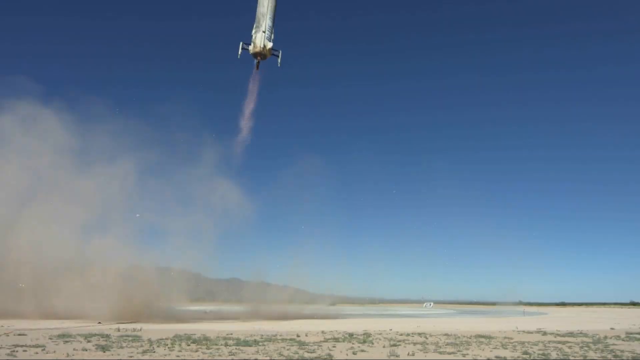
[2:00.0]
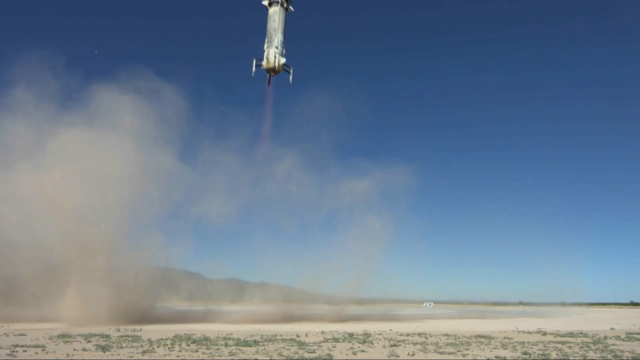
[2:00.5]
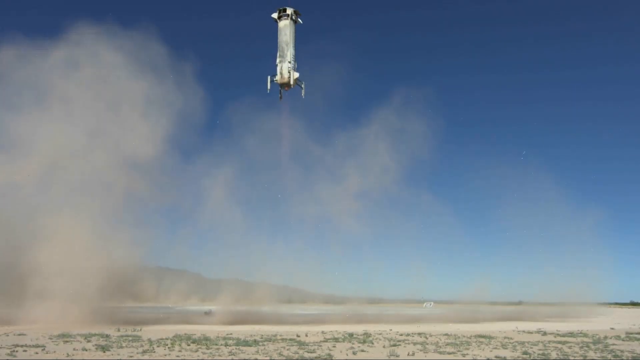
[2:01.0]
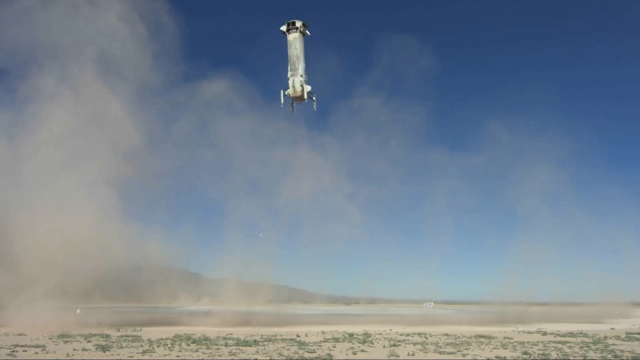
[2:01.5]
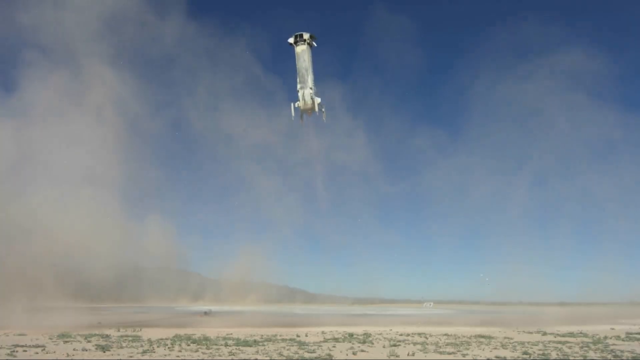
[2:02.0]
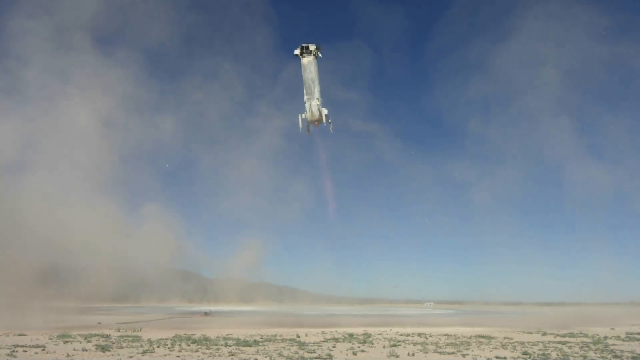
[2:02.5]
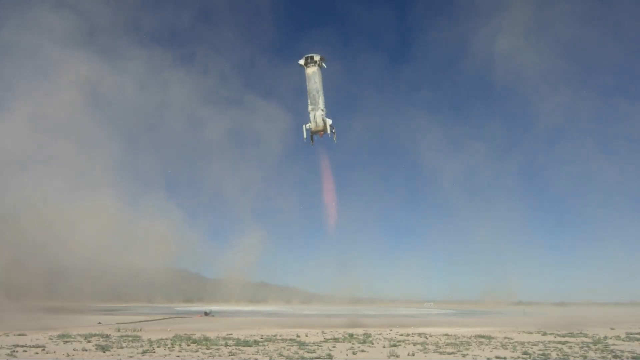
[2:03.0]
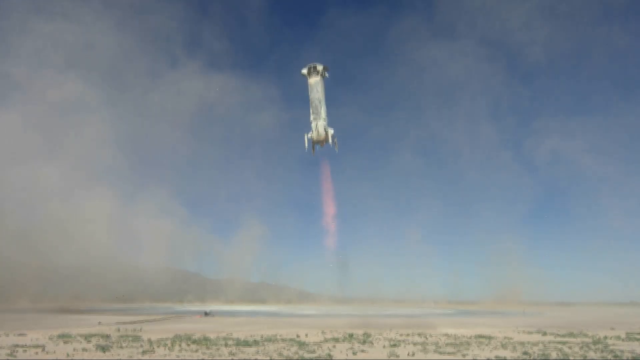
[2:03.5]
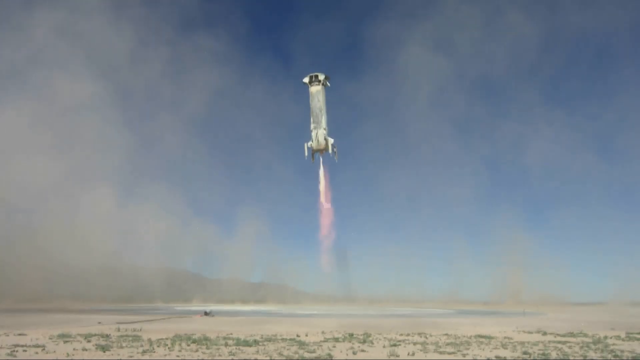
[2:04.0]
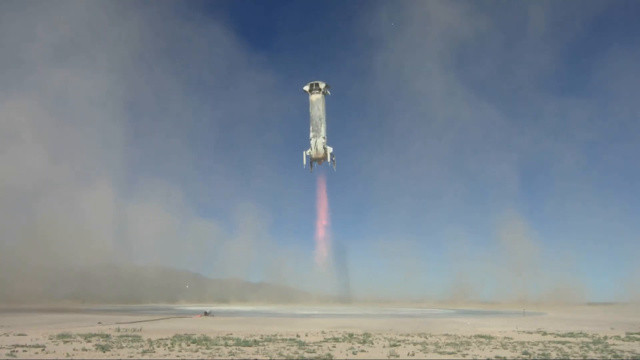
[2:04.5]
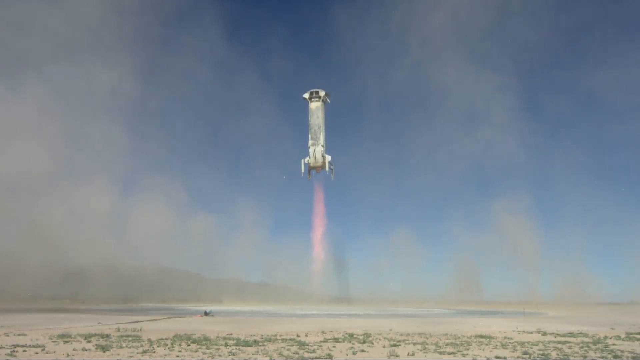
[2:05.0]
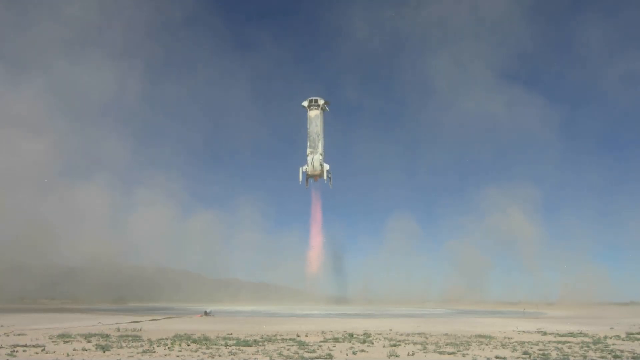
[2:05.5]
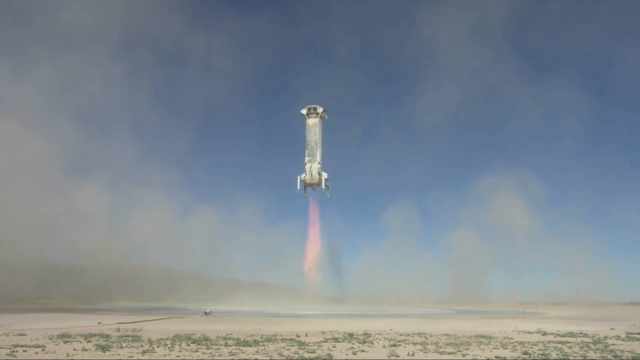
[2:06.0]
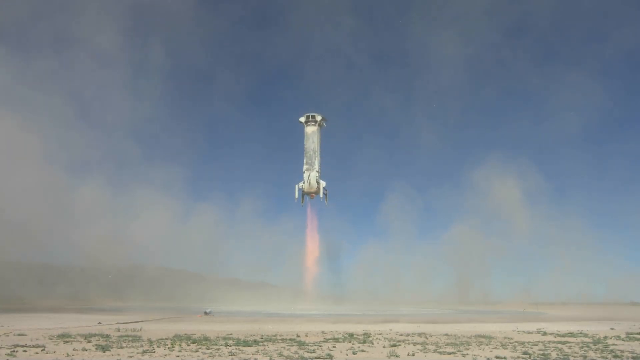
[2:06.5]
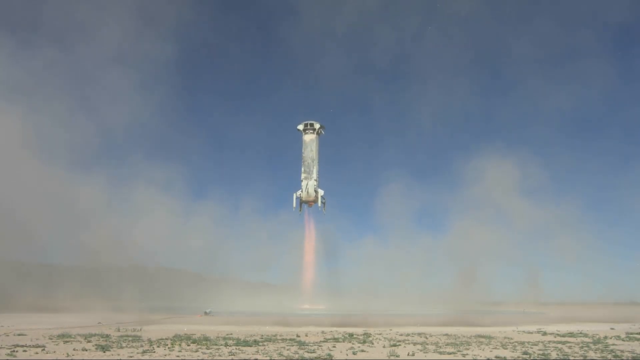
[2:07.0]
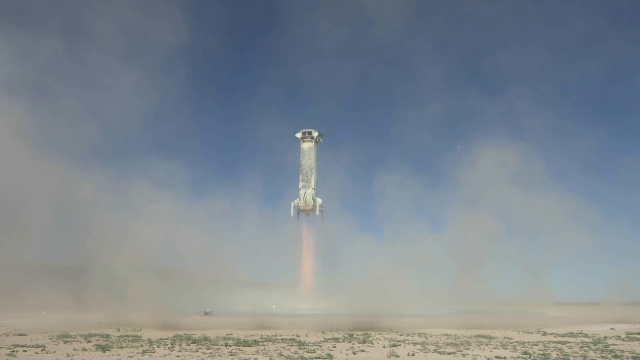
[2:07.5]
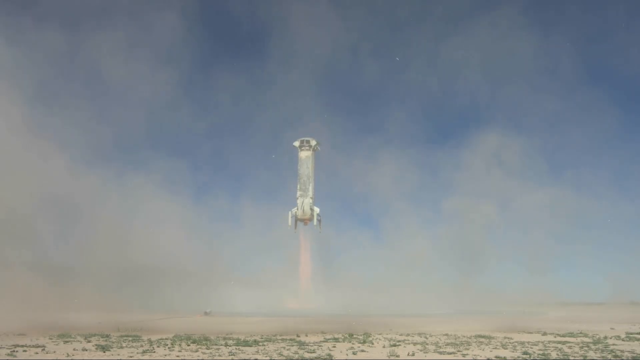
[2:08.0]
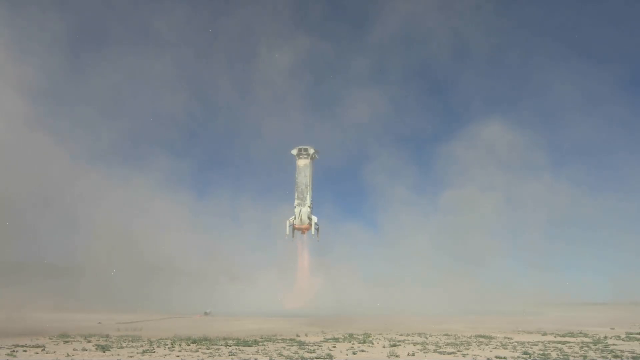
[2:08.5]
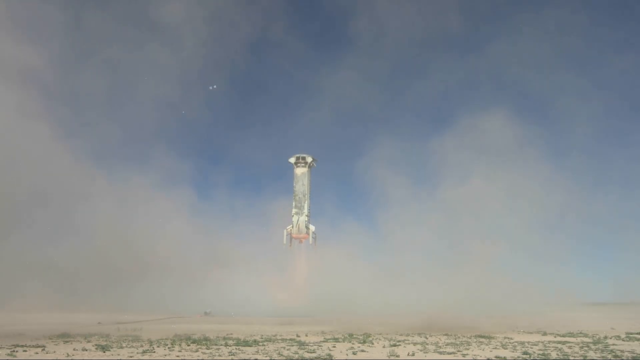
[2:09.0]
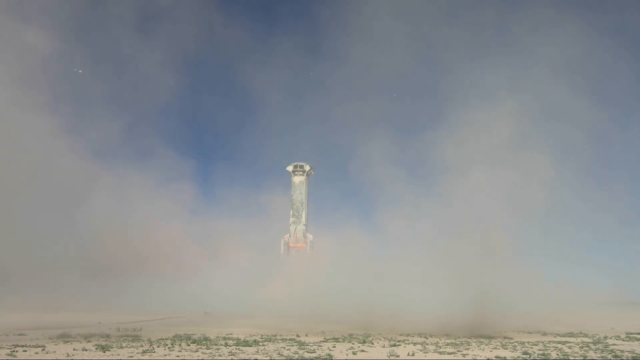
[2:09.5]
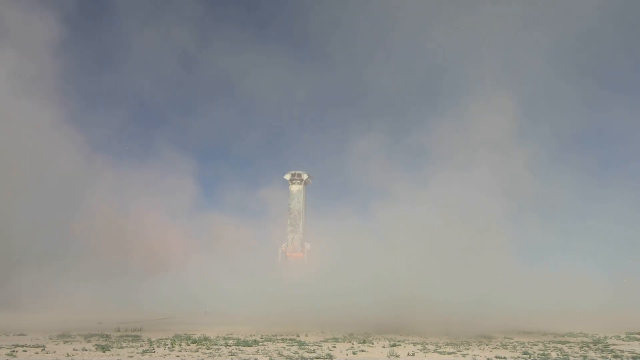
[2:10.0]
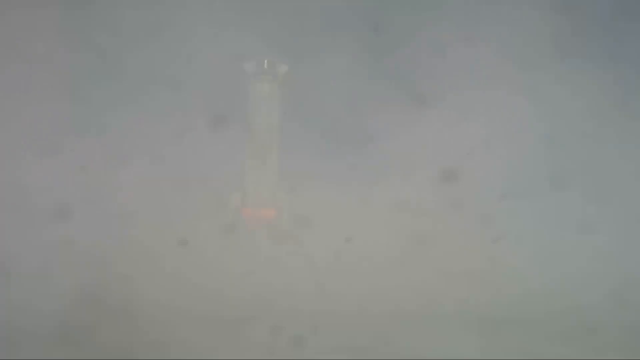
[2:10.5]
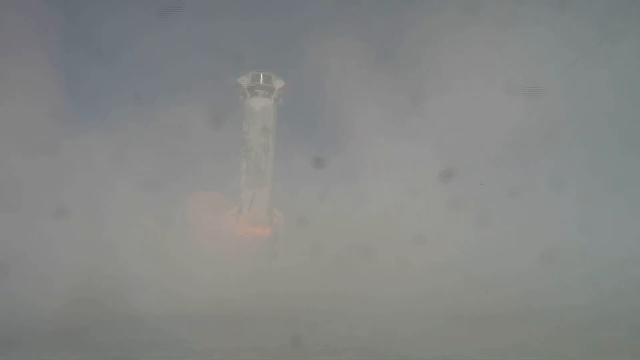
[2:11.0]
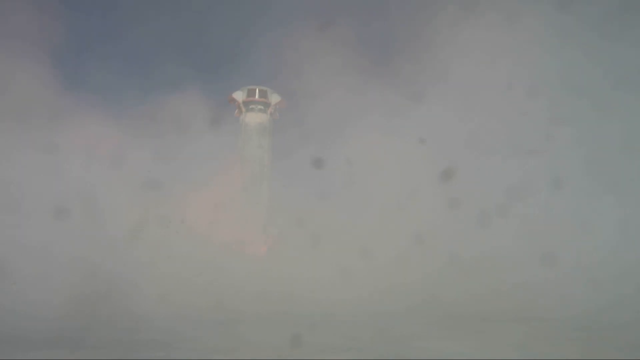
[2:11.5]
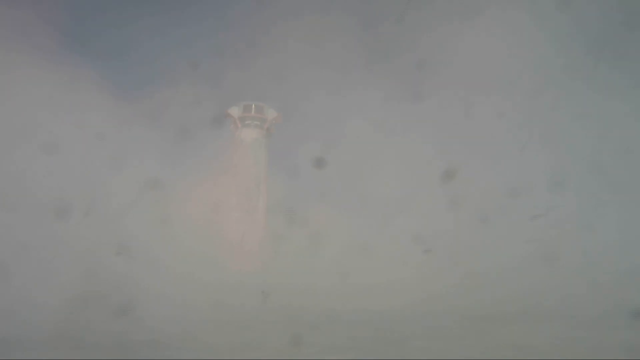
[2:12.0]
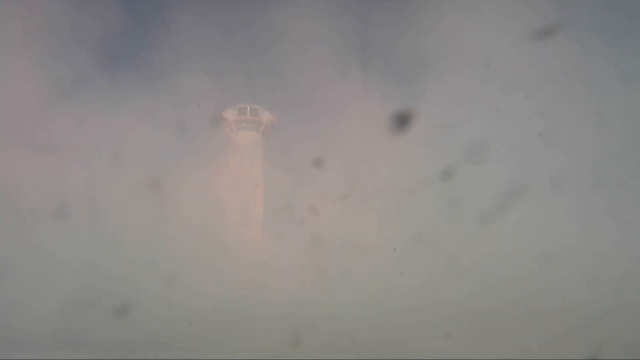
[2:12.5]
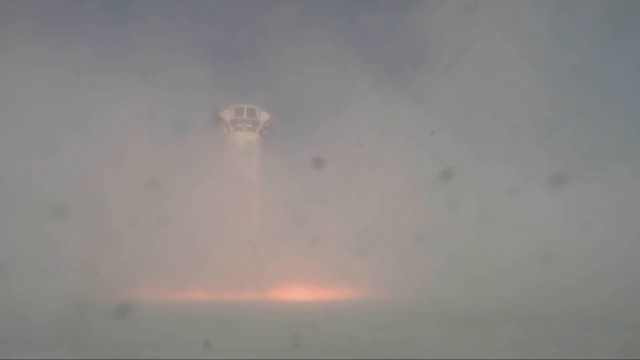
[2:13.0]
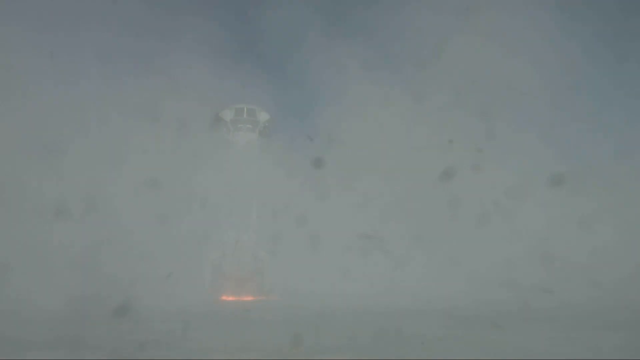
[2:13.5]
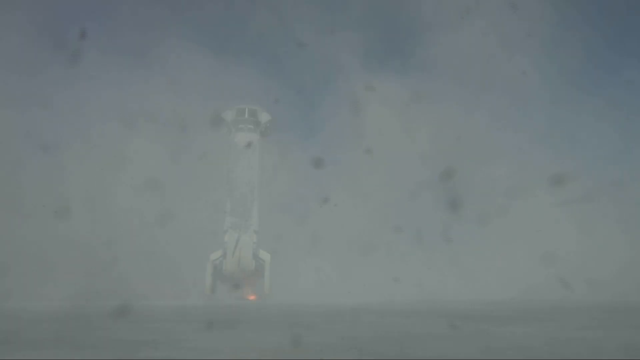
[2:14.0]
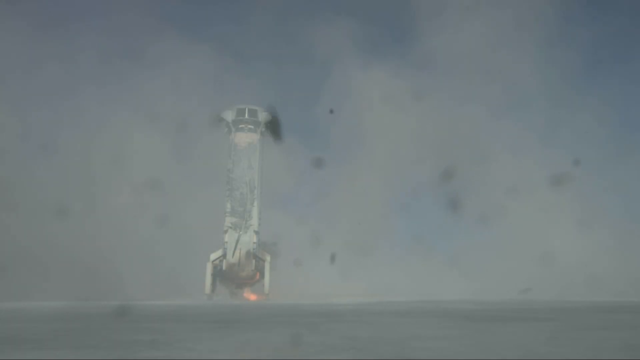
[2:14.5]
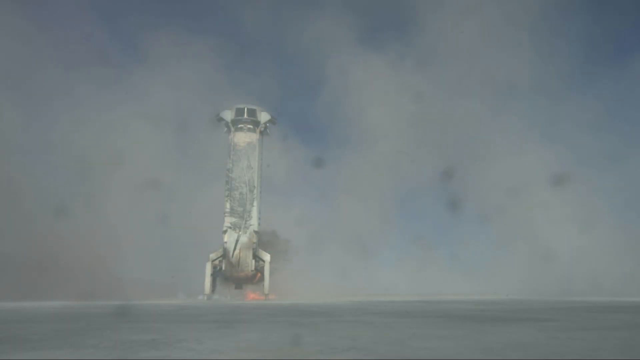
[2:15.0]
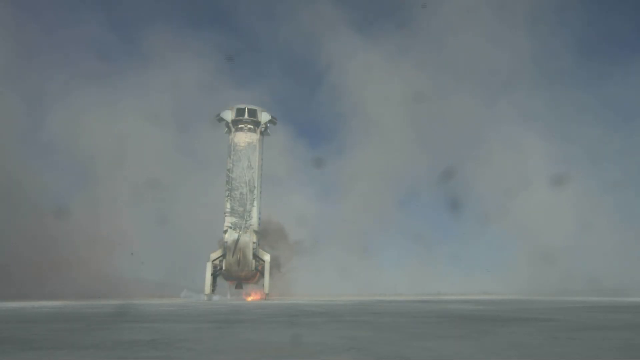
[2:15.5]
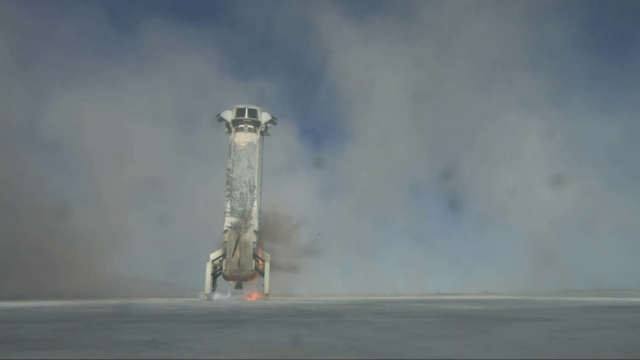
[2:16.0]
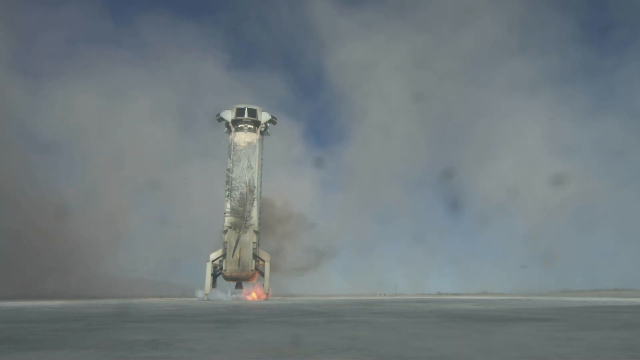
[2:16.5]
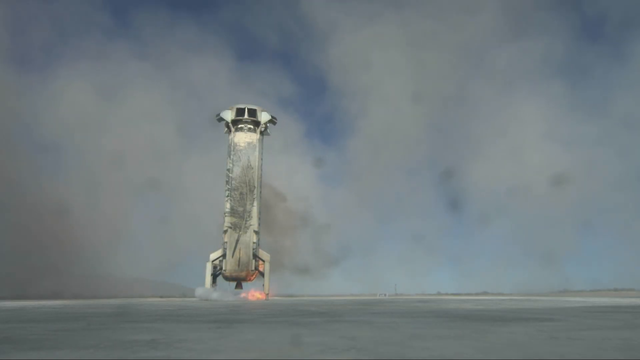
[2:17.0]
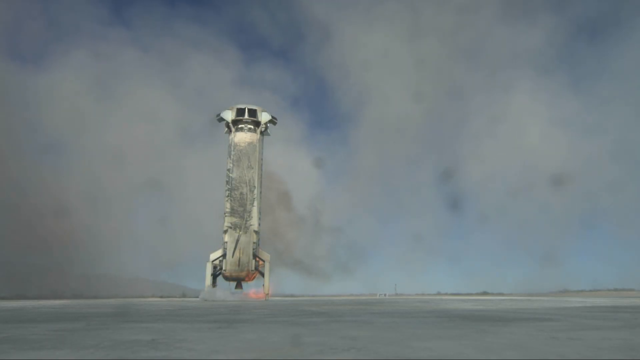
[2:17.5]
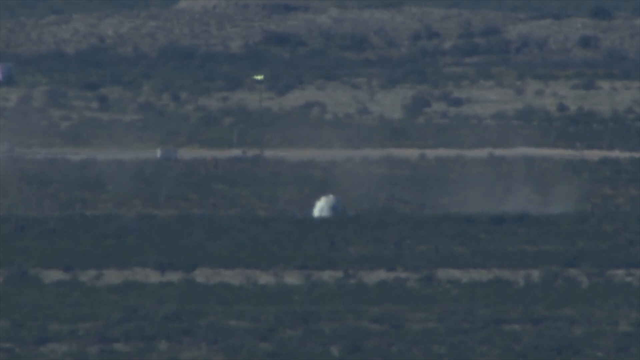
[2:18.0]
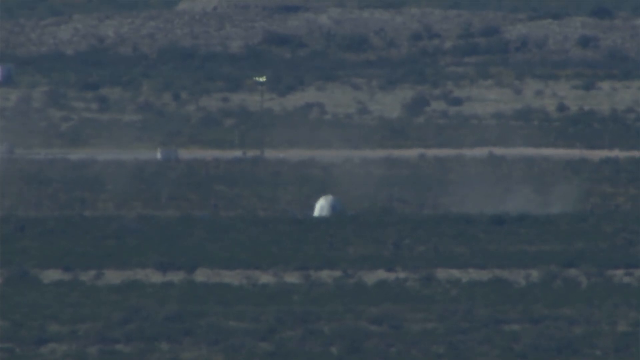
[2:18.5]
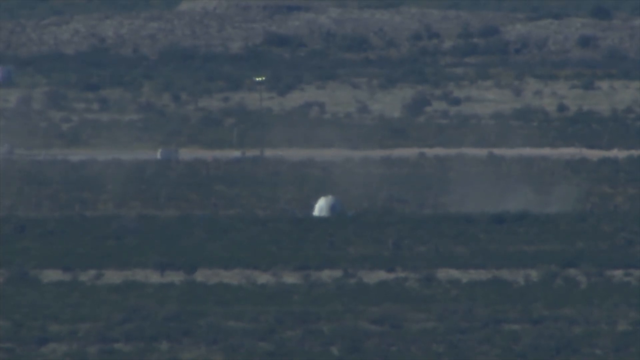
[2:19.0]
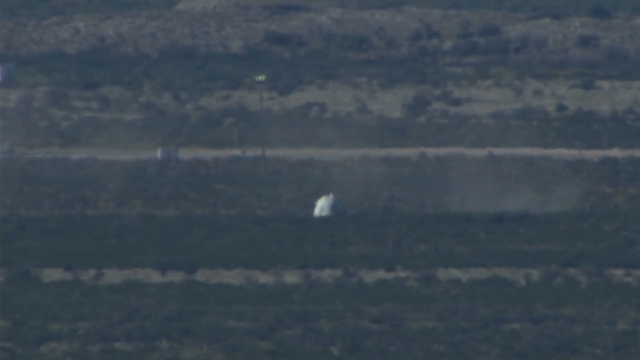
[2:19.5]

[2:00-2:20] A ground-level camera, facing slightly upward, looks at the bottom of the rocket piece as it descends. Smoke and fire issue downward in a straight line from its bottom, and the rocket begins to kick up big clouds of dust as it nears the ground. As it slows close to the ground, the orange flames become more evident. The rocket lands, almost totally obscured by dust. As the dust begins to clear slightly, the rocket's bottom is still issuing flame as it settles onto the ground, and it takes a moment for the flames to subside. The clouds of dust grow thicker at first and then lessen, and black smoke comes from the bottom of the rocket upward. The view then changes to what looks like the nose cone, partially obscured behind a hill in the middle distance of the frame.